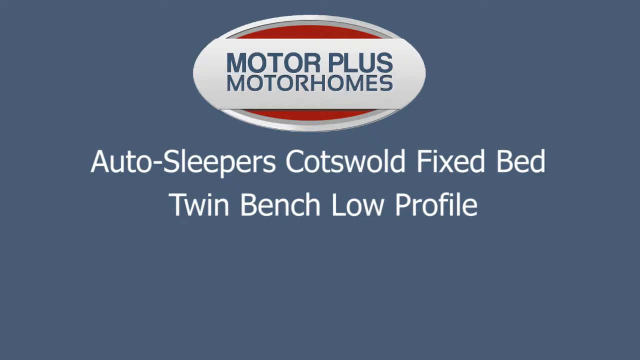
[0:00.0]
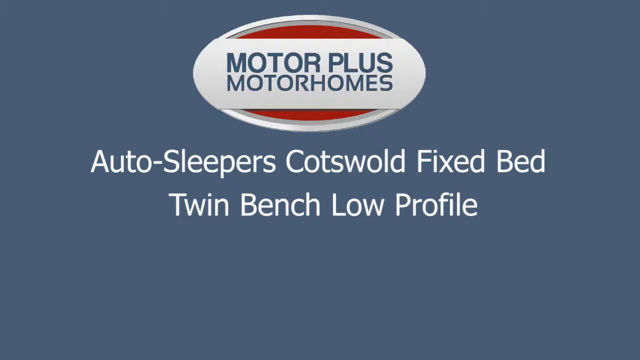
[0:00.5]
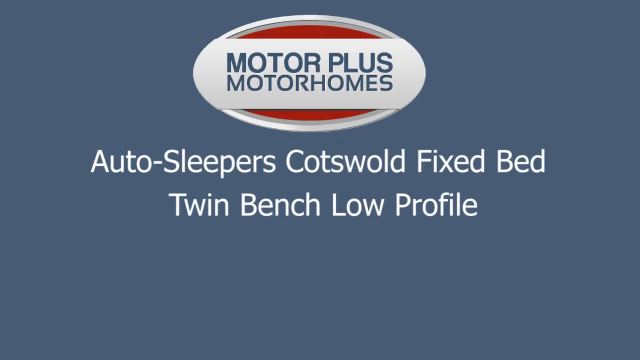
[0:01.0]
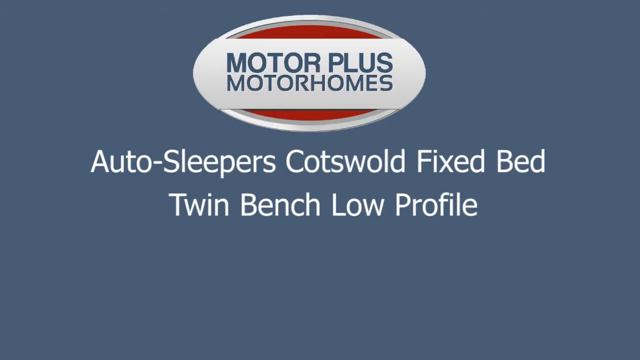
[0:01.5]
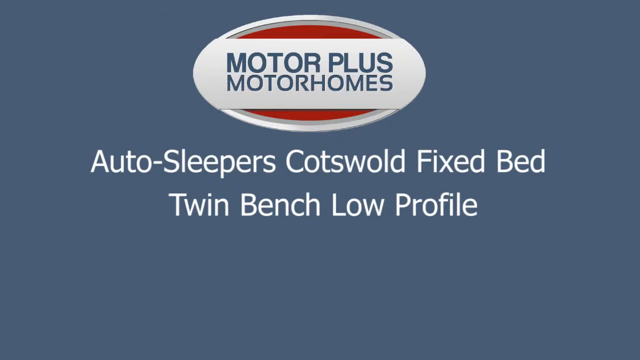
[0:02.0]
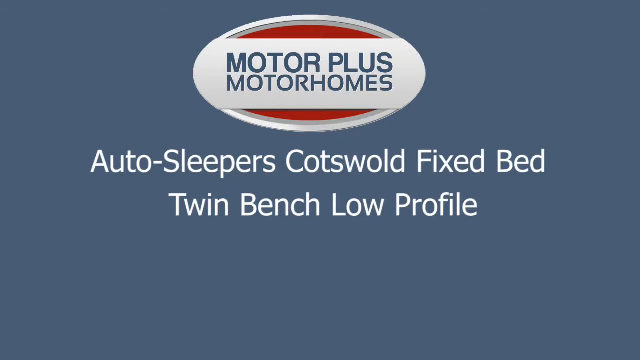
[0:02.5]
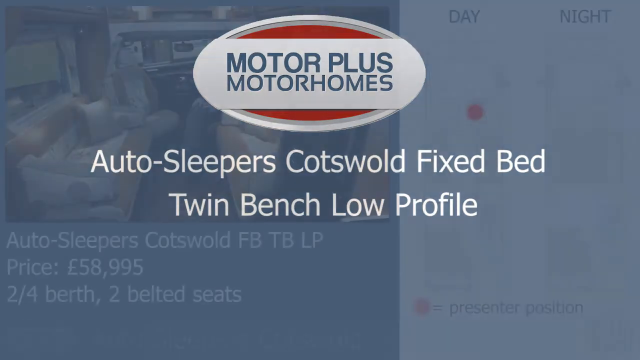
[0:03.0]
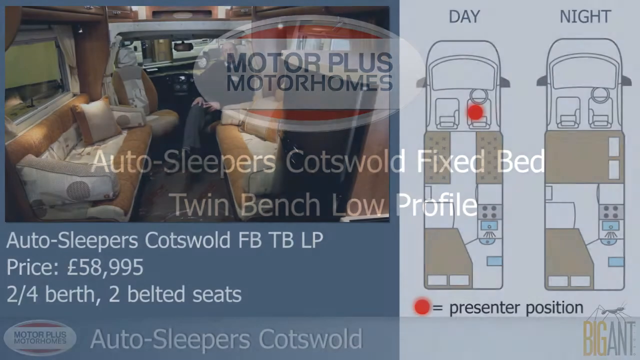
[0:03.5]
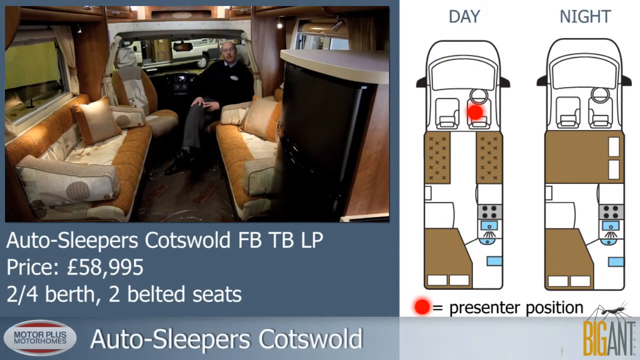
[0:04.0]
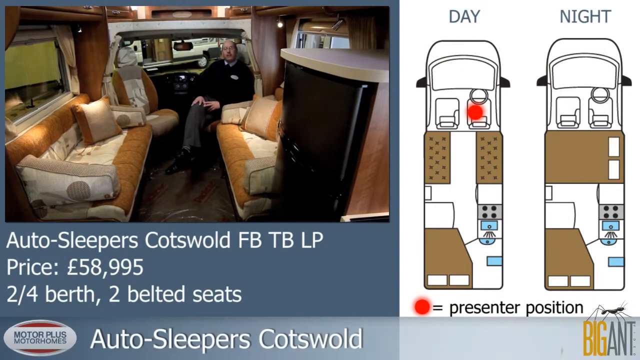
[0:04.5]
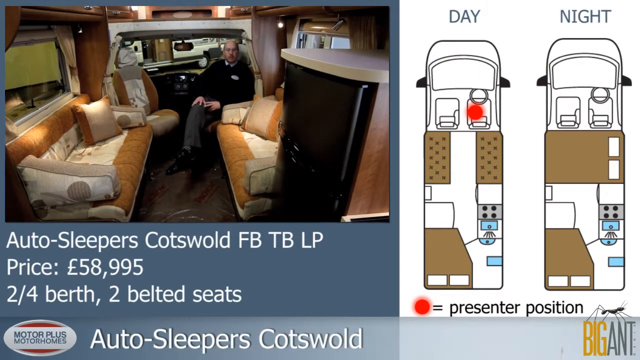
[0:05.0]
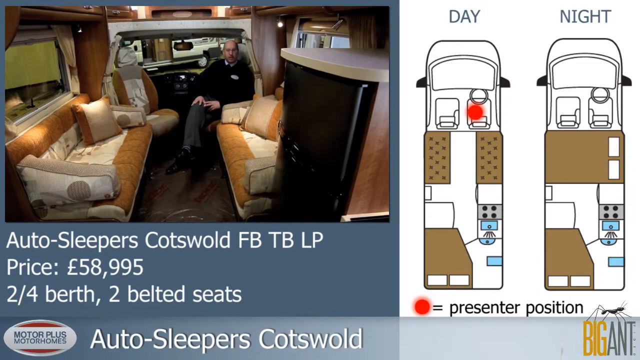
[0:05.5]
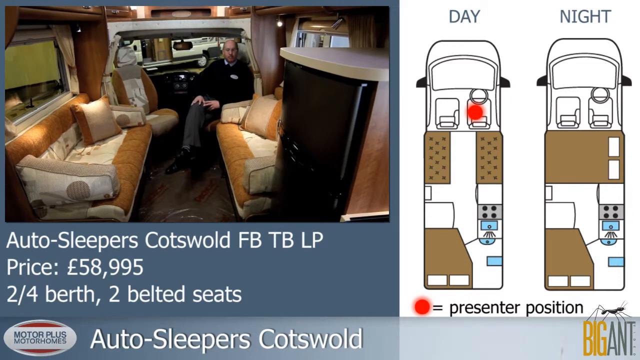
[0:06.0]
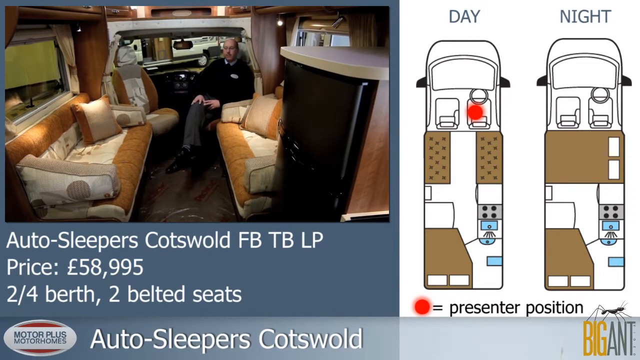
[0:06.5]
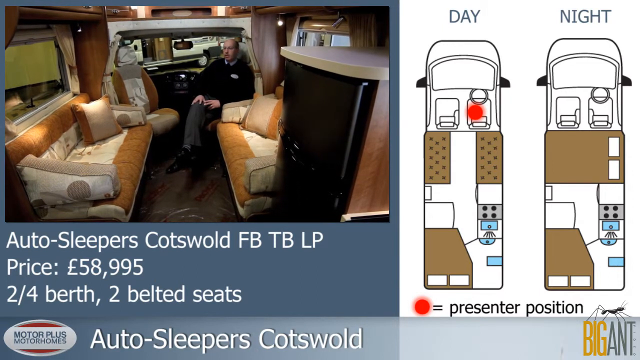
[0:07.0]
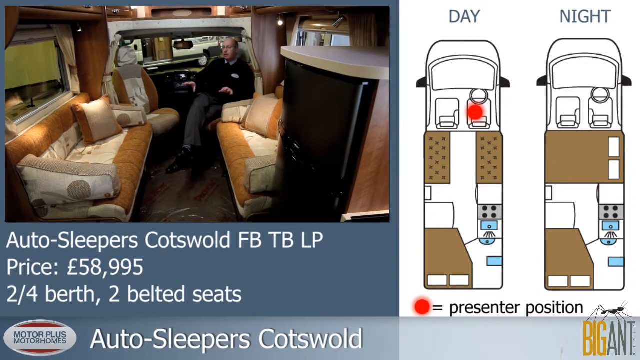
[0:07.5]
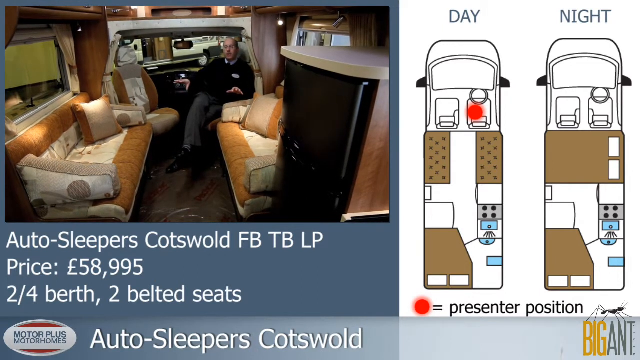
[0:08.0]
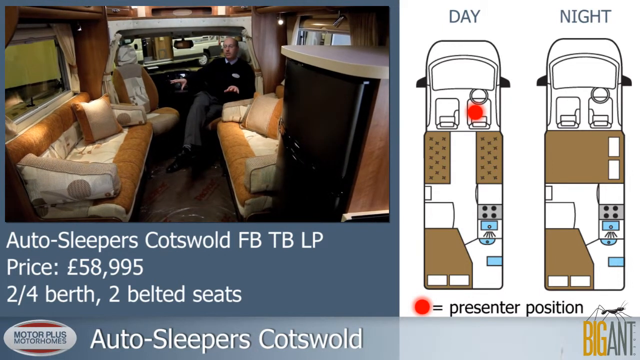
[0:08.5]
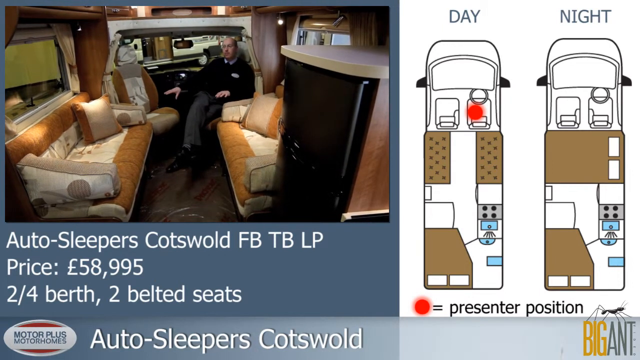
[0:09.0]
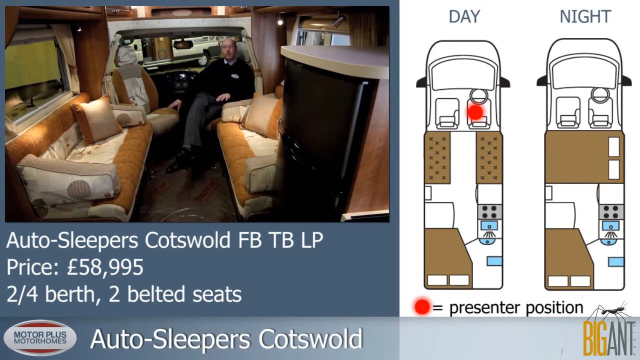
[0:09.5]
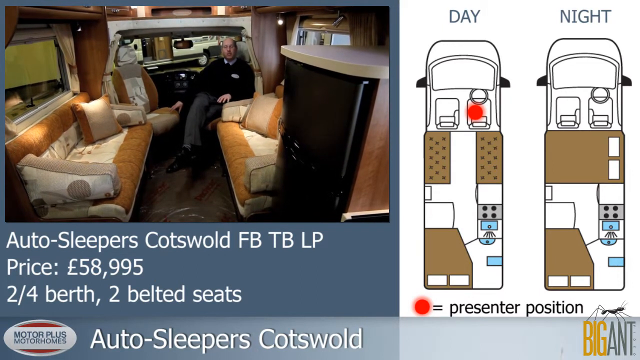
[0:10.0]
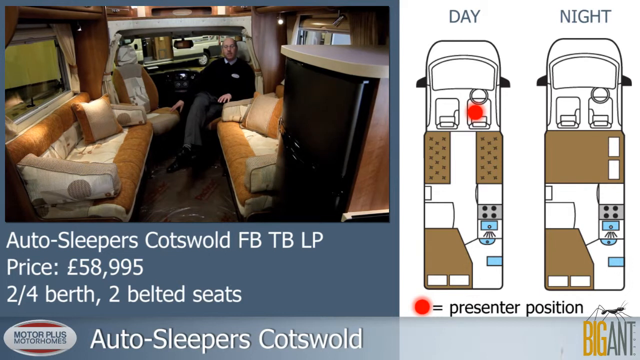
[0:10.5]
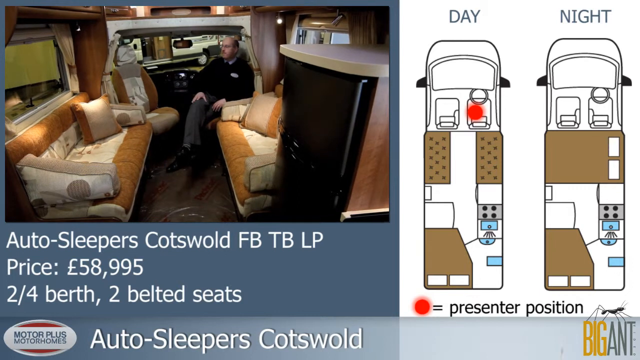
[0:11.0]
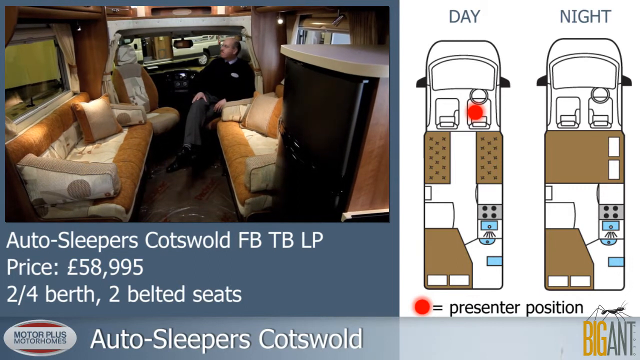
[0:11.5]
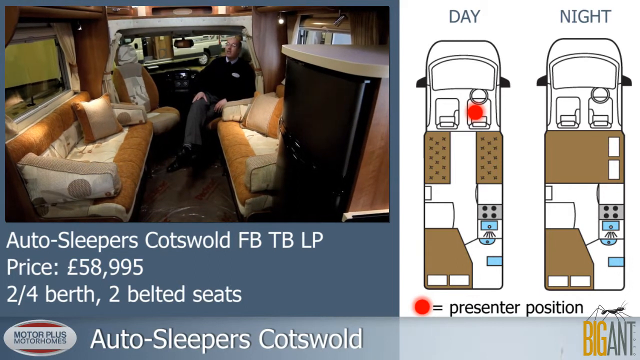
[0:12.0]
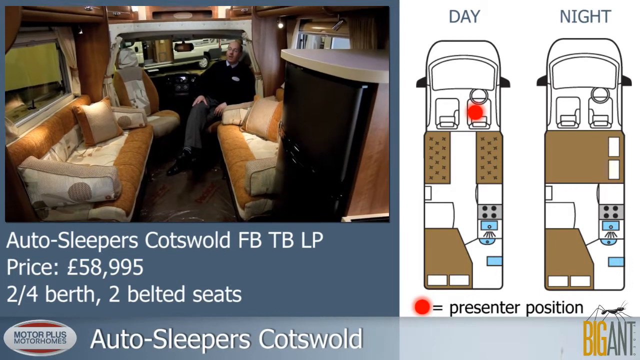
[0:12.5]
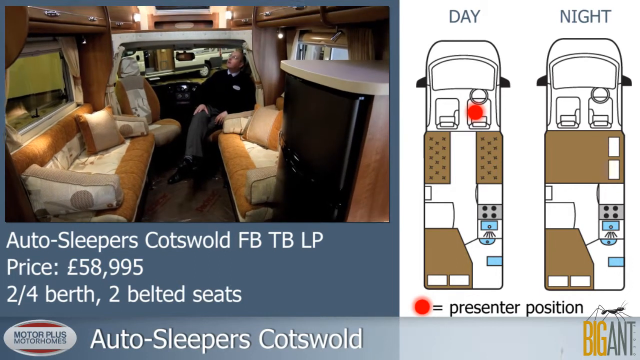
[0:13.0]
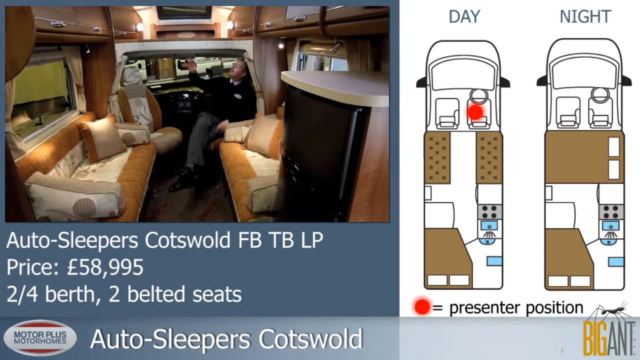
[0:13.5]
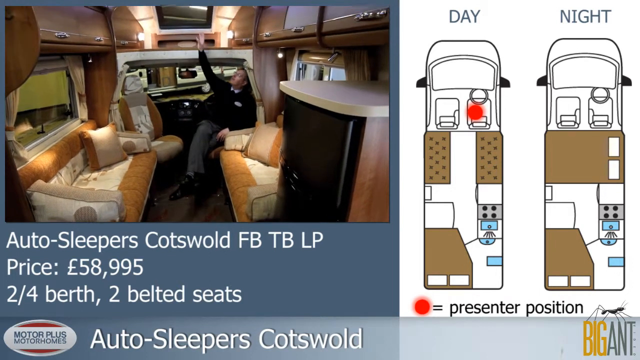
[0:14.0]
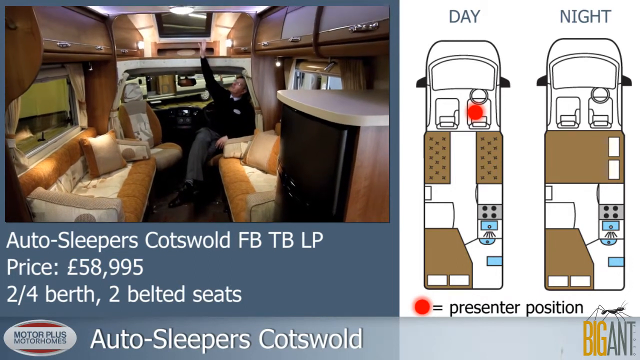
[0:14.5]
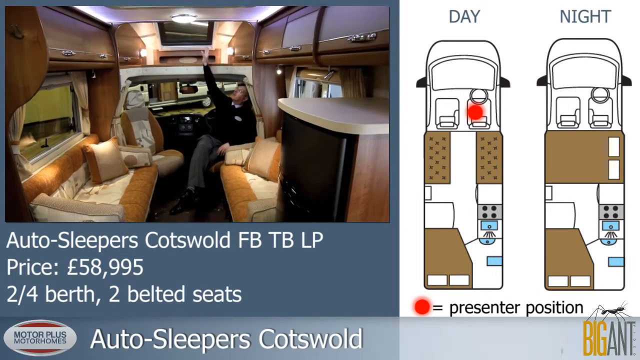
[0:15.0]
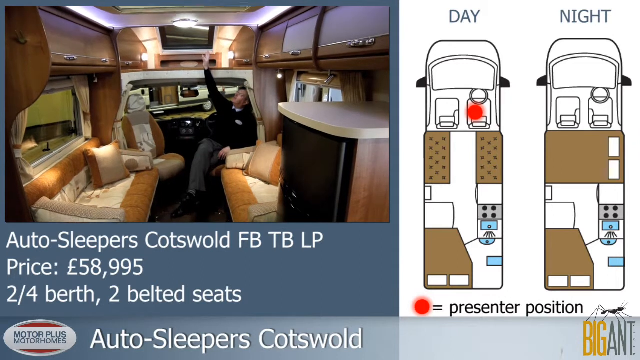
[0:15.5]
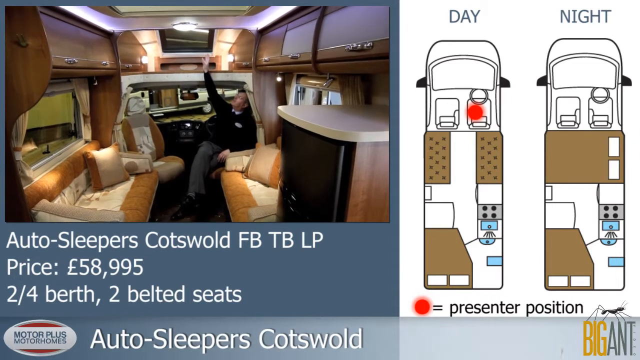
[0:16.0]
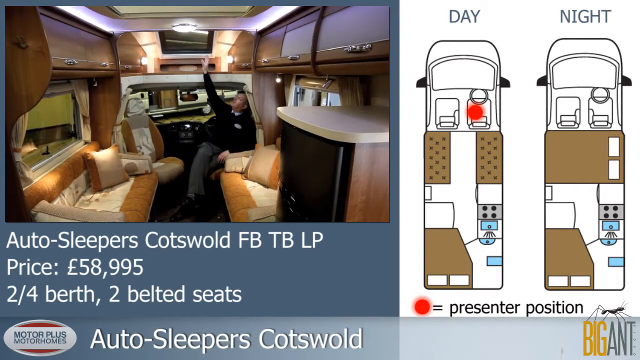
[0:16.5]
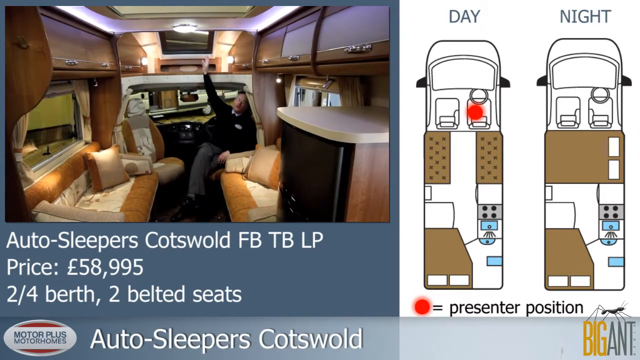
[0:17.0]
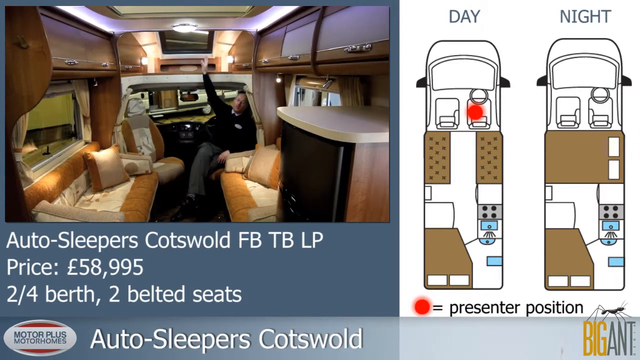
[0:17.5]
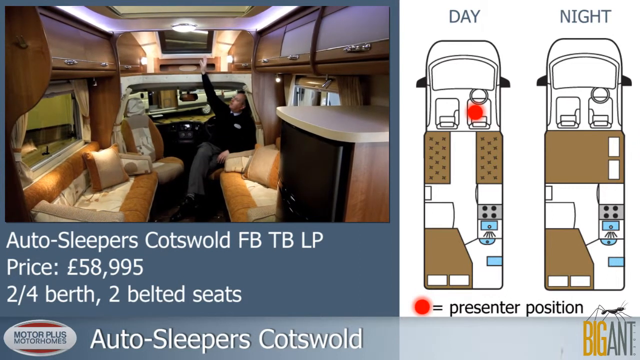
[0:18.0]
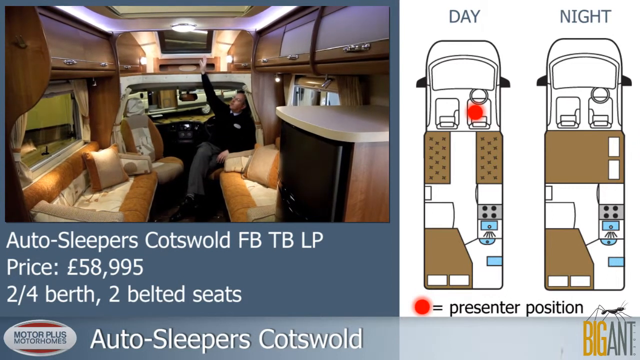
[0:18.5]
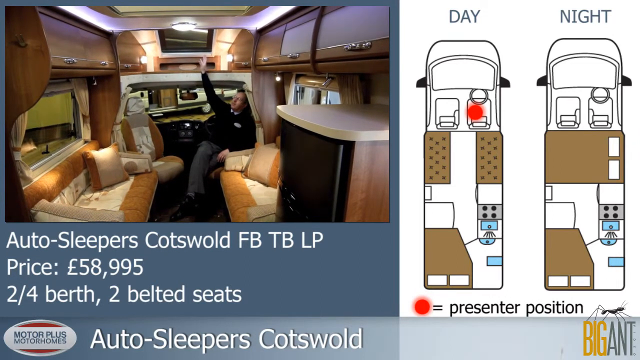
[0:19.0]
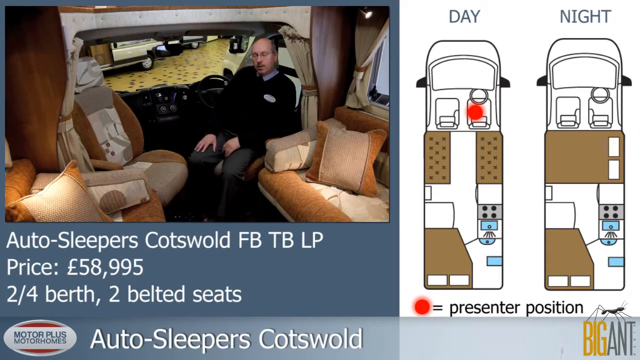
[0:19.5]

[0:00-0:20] The video is an advert from Motor Plus Motorhomes about the Autosleepers Cotswold fixed bed, which has a twin bench low profile. It opens with the Cotswold Motorhomes logo on a grey background, followed by a photo of the motorhome's interior, which has very plush sofas. The driver's seat and passenger seat can be turned through 360 degrees, and there appears to be either a cupboard or a fridge freezer with storage space on its top. A man, a salesman, is sat in the motorhome, and the Cotswold is stated to be available for £58,995. It can be either a two or a four berth and has two belted seats up front. The configuration is shown for both day and night. In the daytime configuration the presenter is in the driving seat, facing inwards rather than out onto the road, and the beds are operating as sofas.